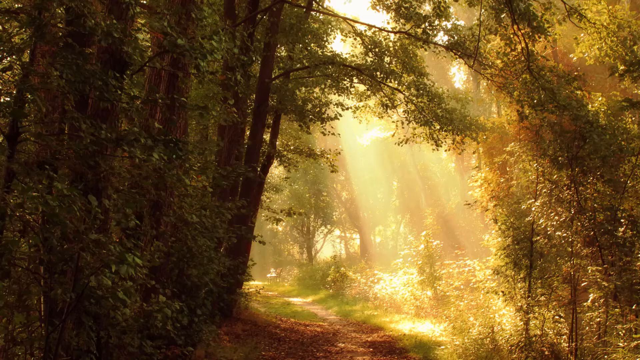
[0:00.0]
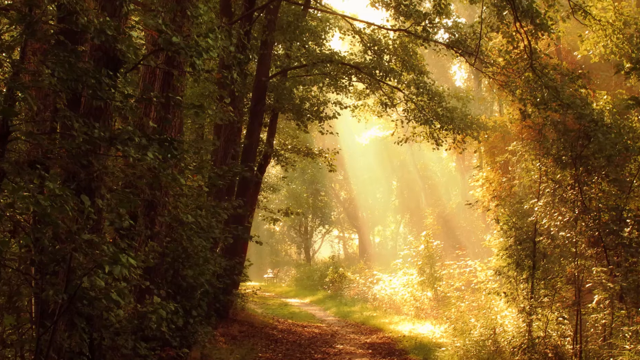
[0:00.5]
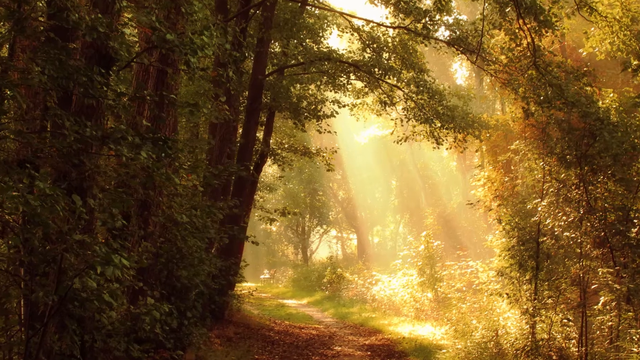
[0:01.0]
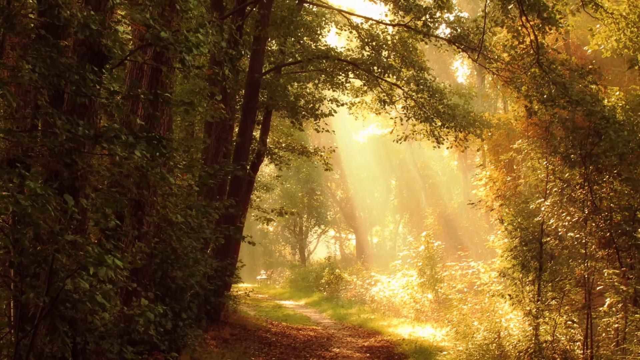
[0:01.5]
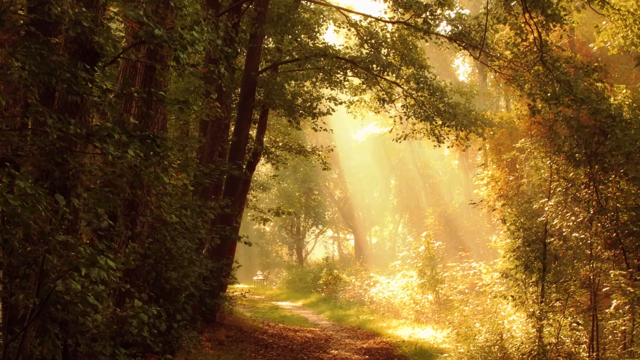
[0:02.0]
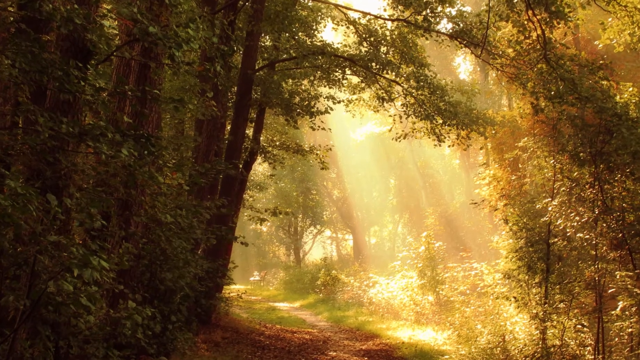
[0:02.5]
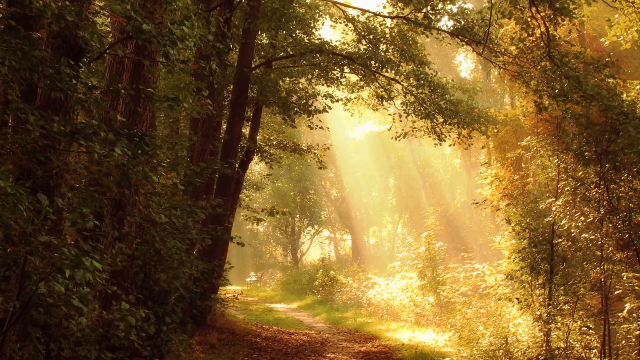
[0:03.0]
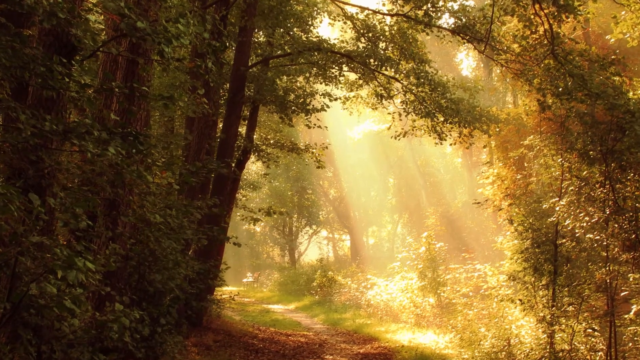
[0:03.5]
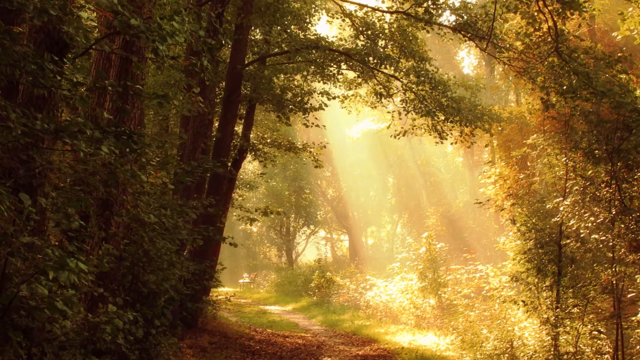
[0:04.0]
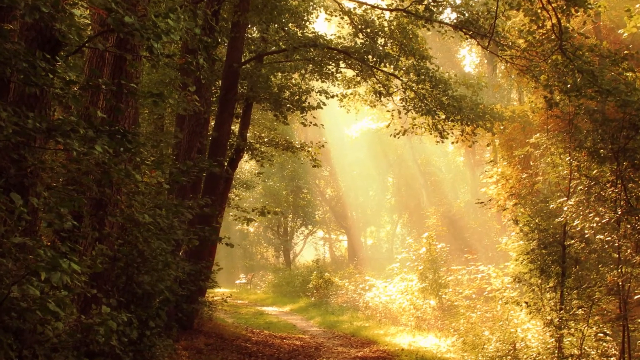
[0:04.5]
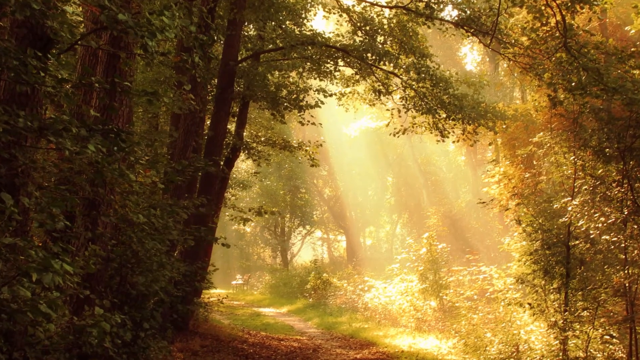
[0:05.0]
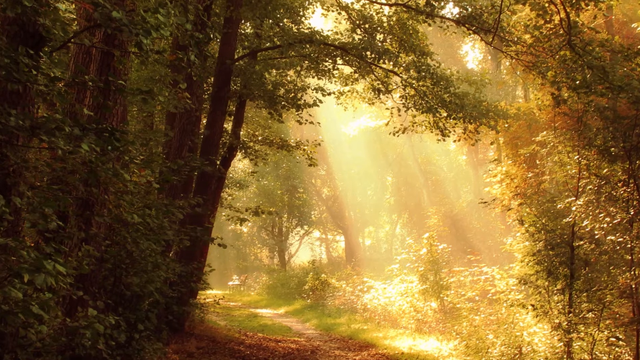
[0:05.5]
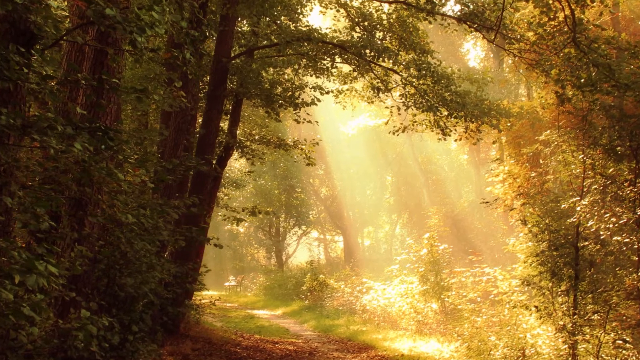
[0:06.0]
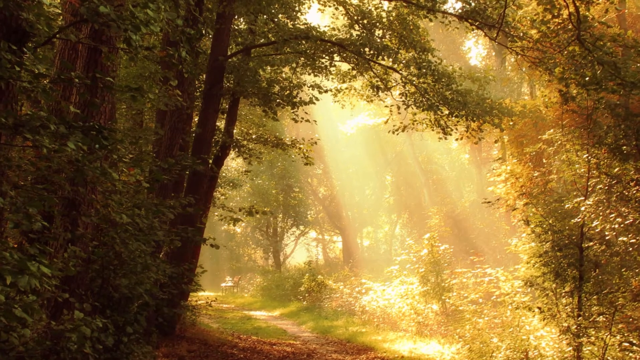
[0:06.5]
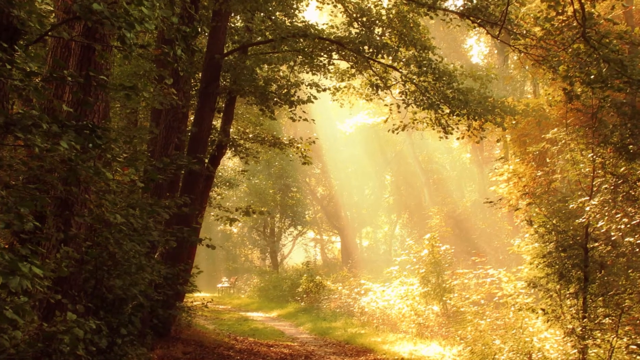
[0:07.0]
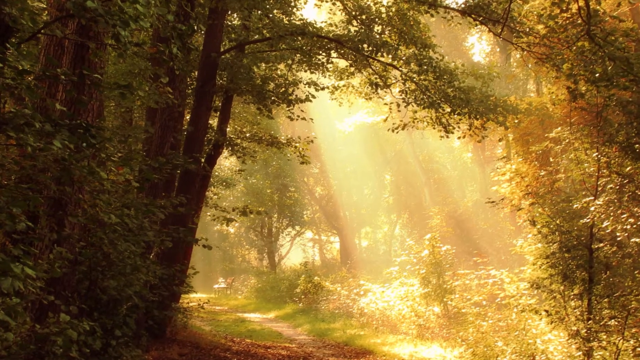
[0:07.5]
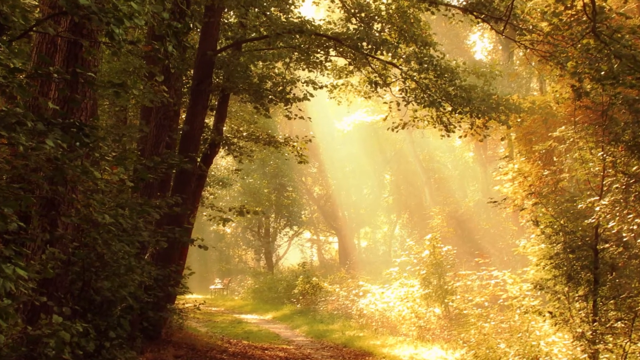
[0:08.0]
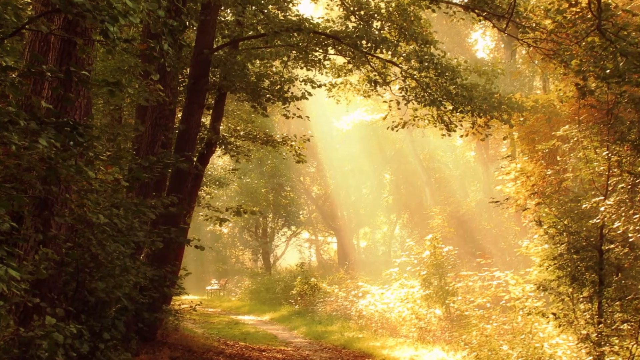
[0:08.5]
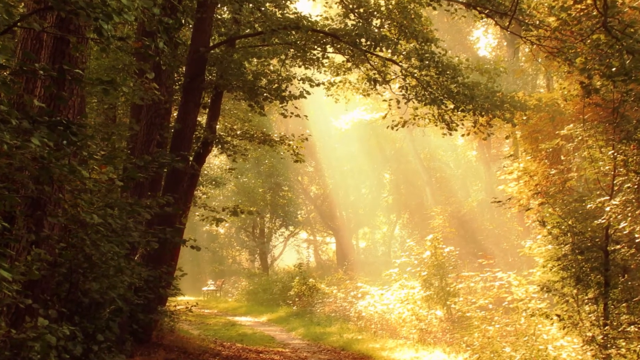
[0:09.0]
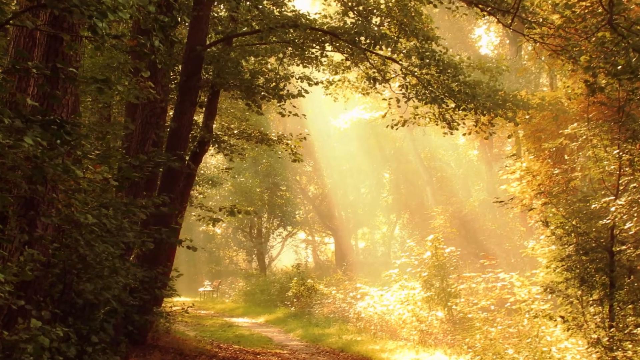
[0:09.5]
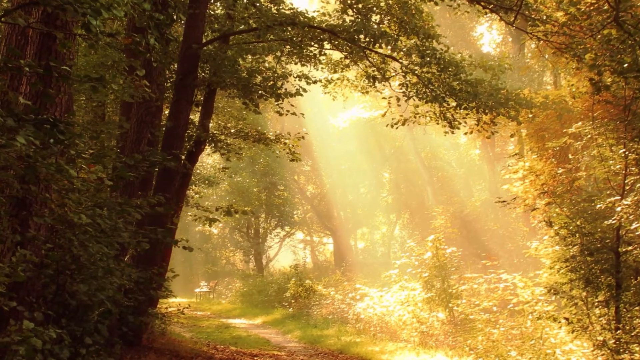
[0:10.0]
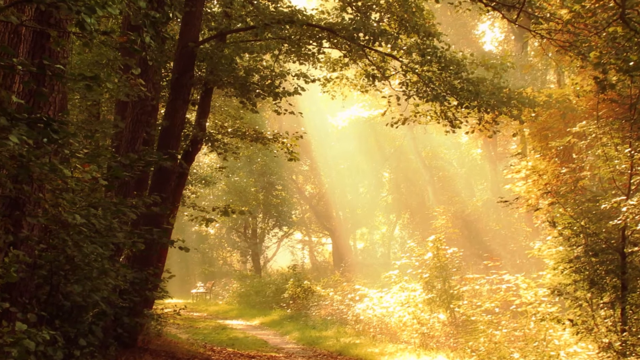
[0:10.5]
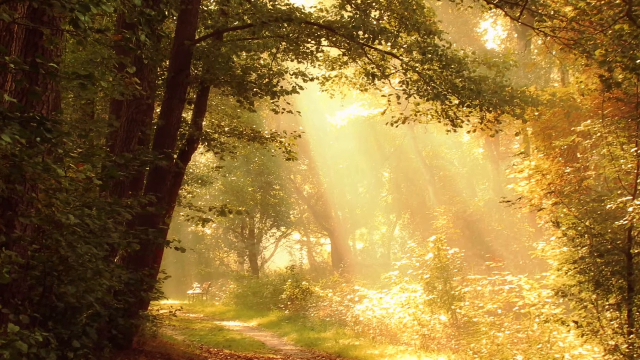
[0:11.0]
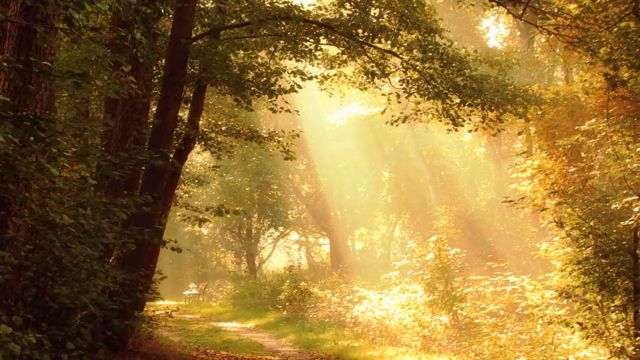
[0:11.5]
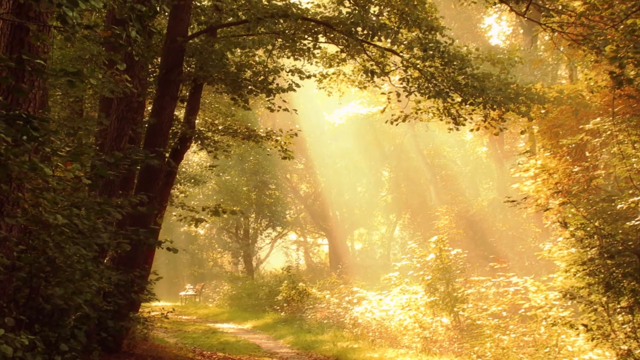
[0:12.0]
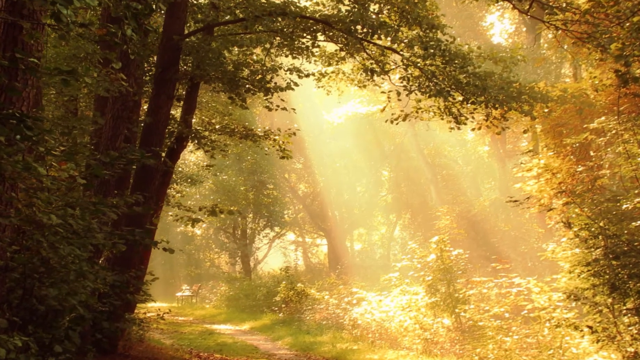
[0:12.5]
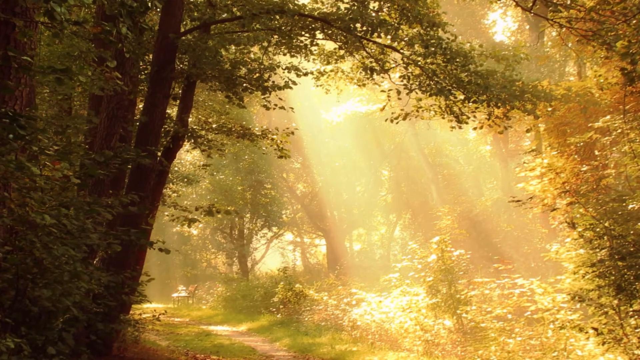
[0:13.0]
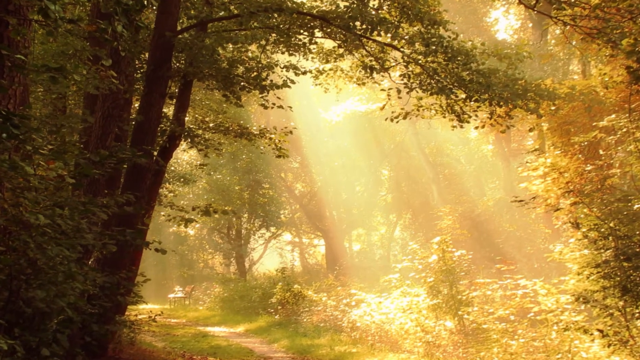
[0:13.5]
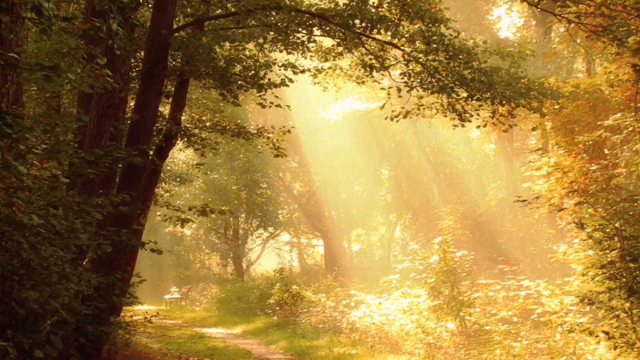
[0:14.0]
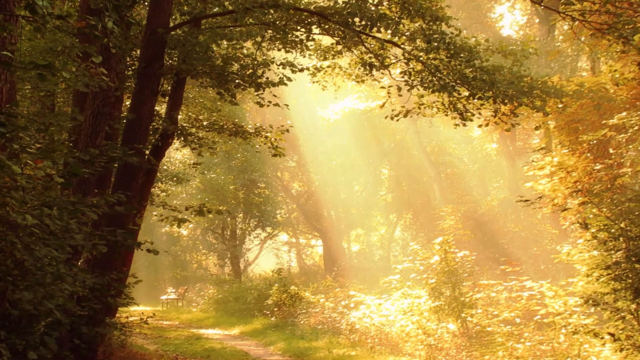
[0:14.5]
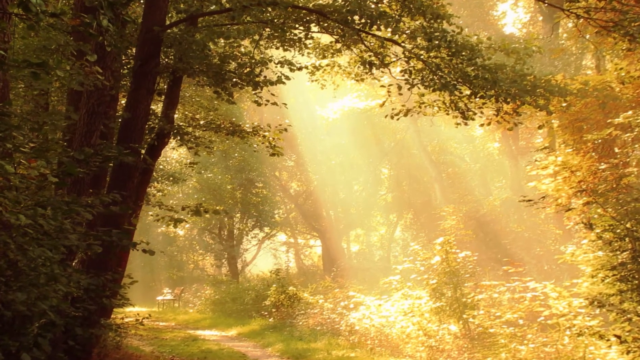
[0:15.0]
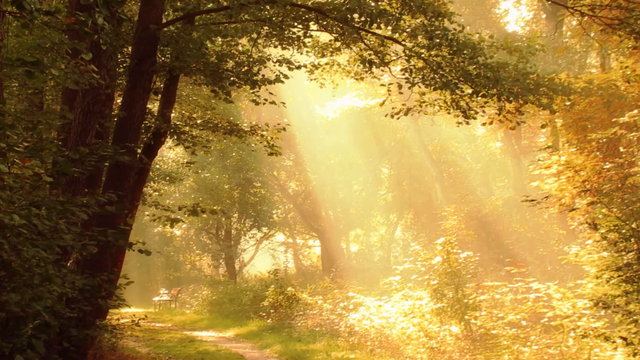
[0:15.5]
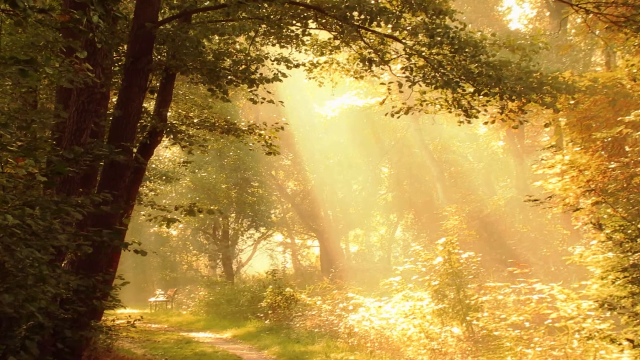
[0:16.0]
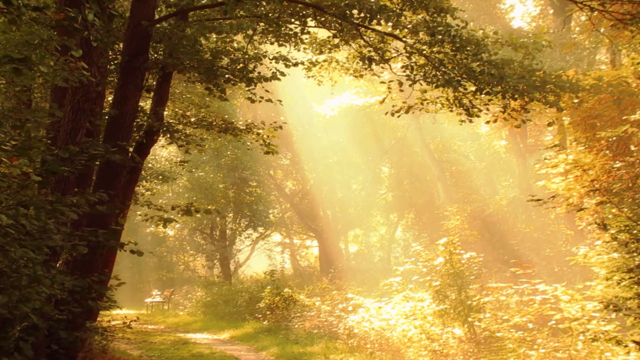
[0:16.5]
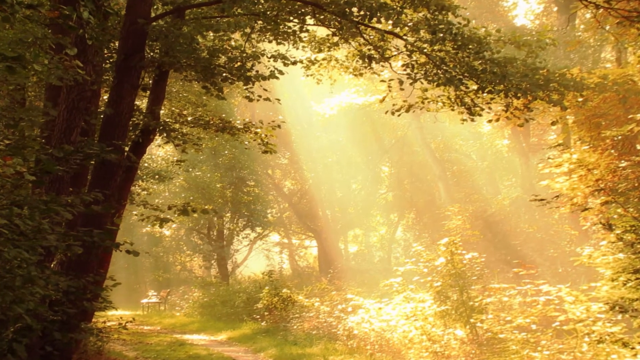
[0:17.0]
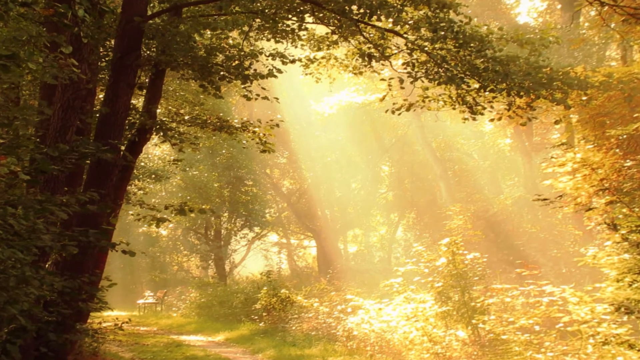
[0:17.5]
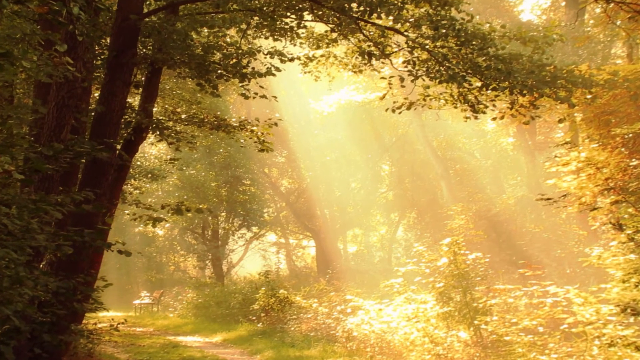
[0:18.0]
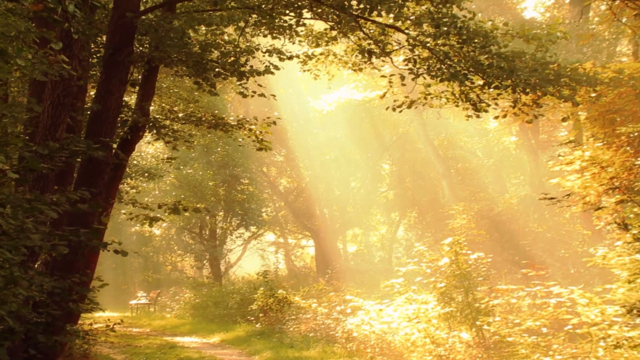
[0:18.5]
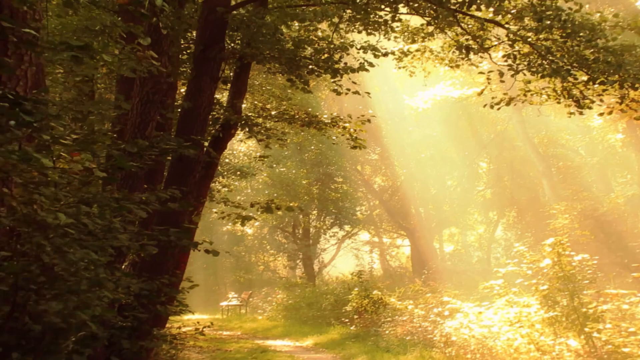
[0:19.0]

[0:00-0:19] A dirt trail runs through the scene. On its left side are tall, huge trees that completely make up the left side of the screen. On the right side of the screen there are other trees, sticks and bushes. The trees have leaves of different colors: on the right some are yellow, pink, light green and dark green, while the left side of the screen is darker and appears to have only light and dark green leaves. Down on the trail lies a group of orange, maroon and brown leaves. Shining through the tops of the trees, a bright sunbeam comes down onto the trail and onto a bushy area of other plants. The light is very bright and yellow, and rays of sun can be seen coming down through the groups of trees.